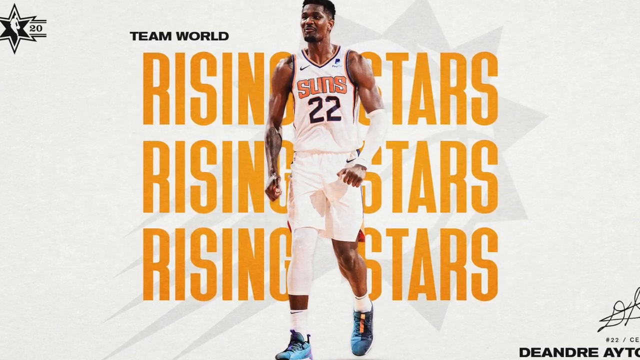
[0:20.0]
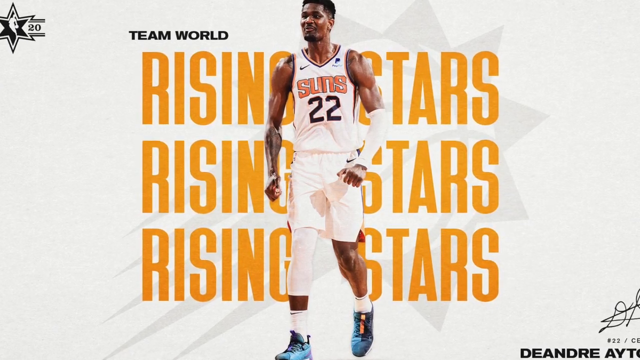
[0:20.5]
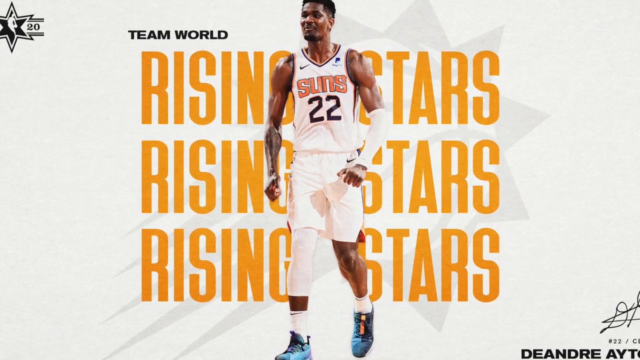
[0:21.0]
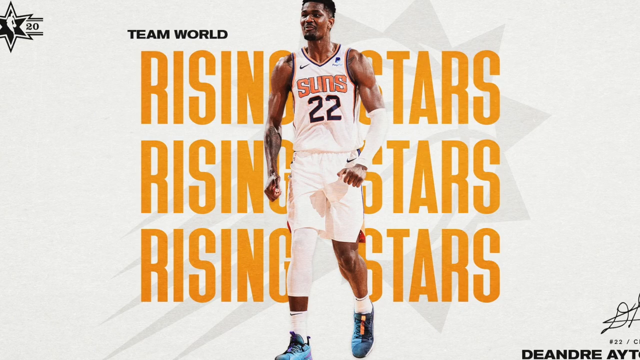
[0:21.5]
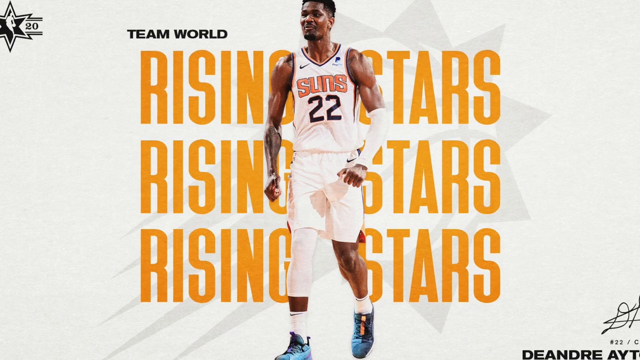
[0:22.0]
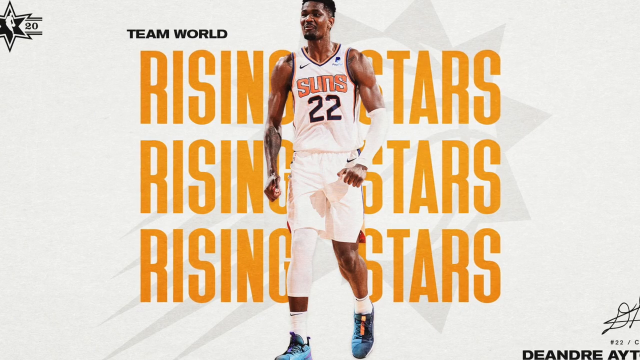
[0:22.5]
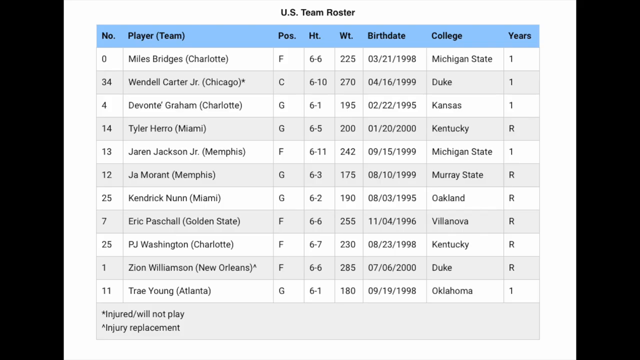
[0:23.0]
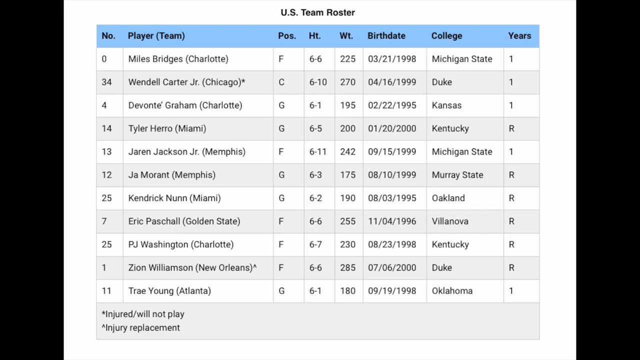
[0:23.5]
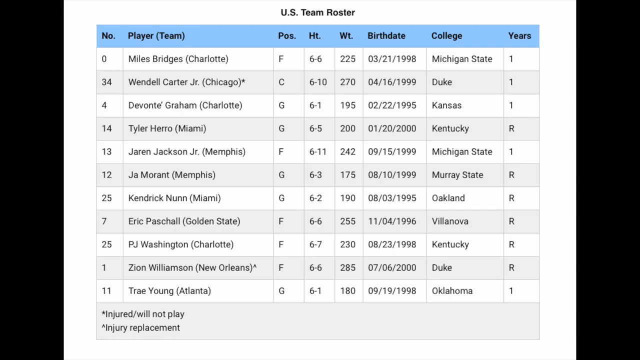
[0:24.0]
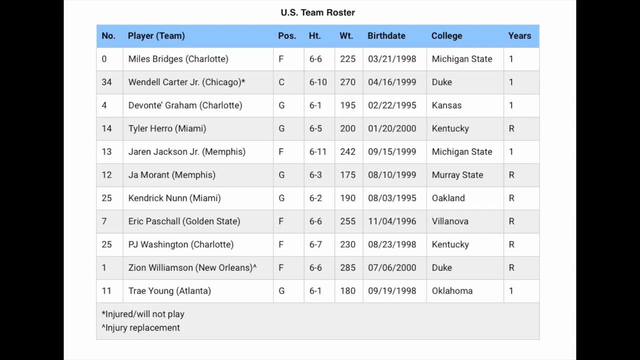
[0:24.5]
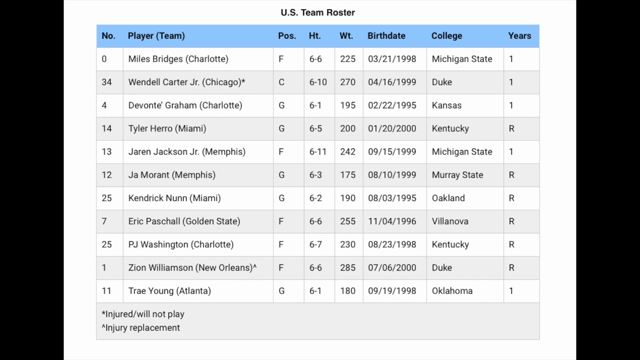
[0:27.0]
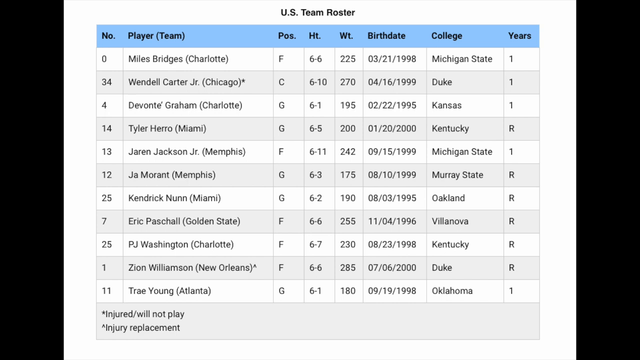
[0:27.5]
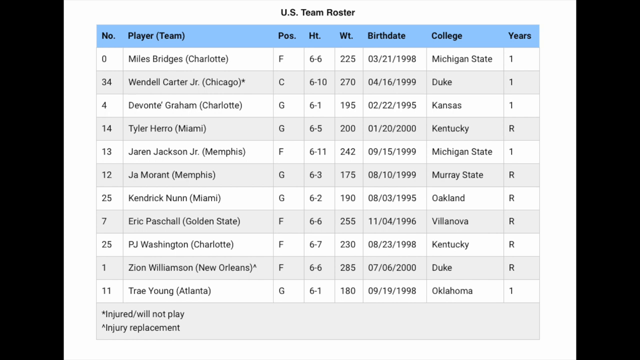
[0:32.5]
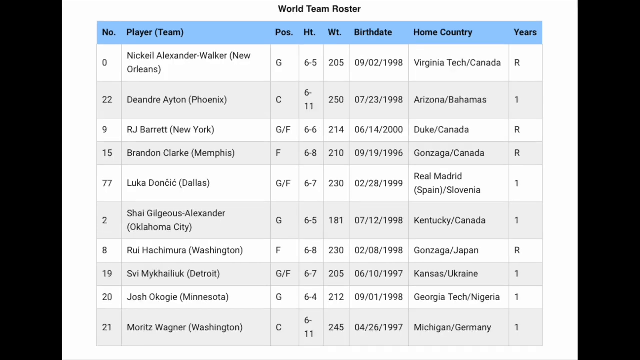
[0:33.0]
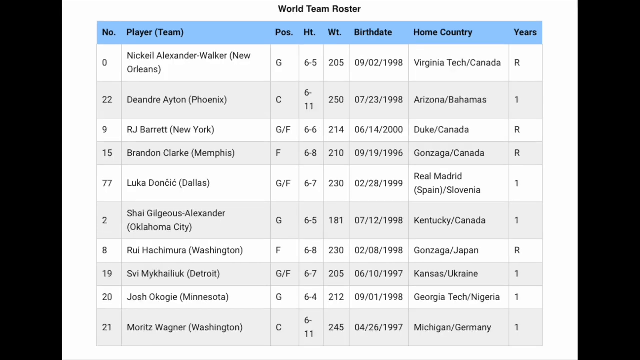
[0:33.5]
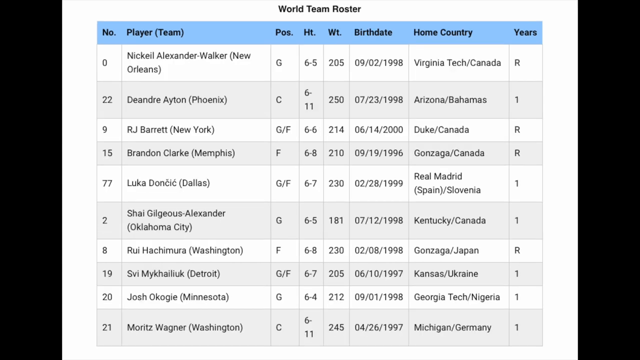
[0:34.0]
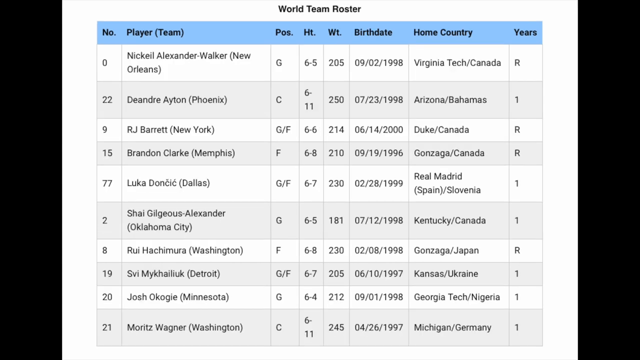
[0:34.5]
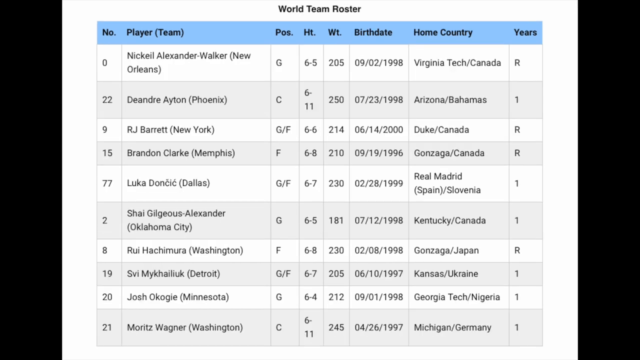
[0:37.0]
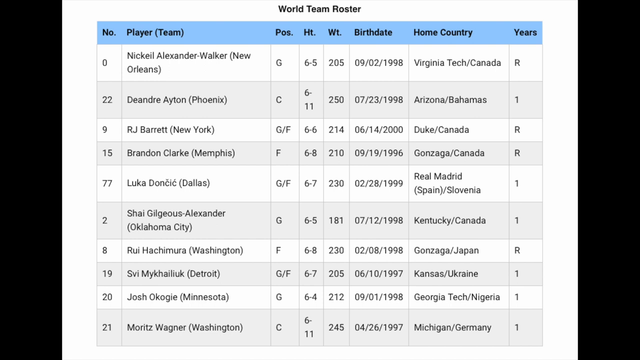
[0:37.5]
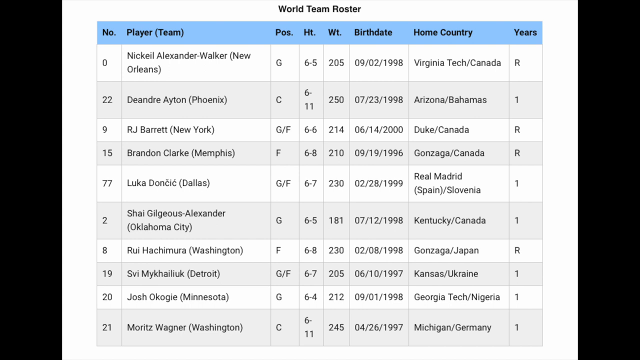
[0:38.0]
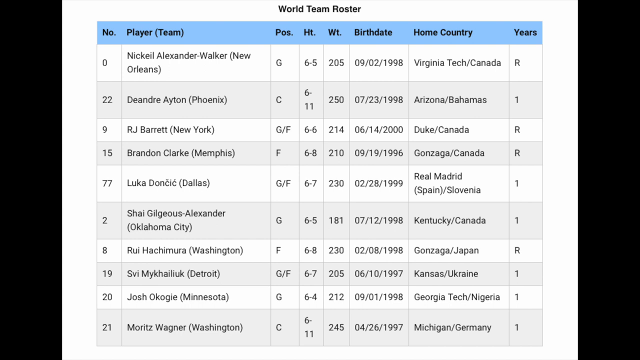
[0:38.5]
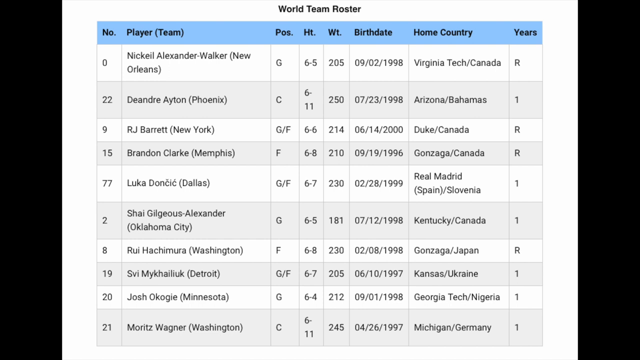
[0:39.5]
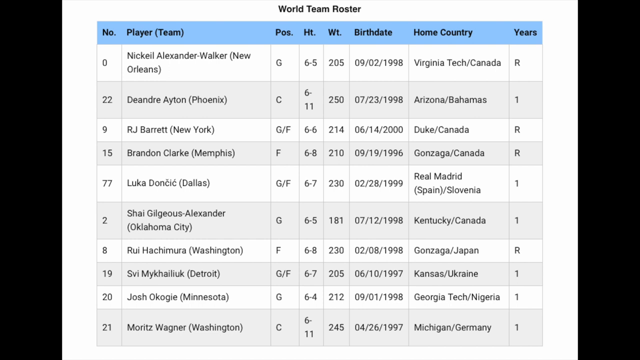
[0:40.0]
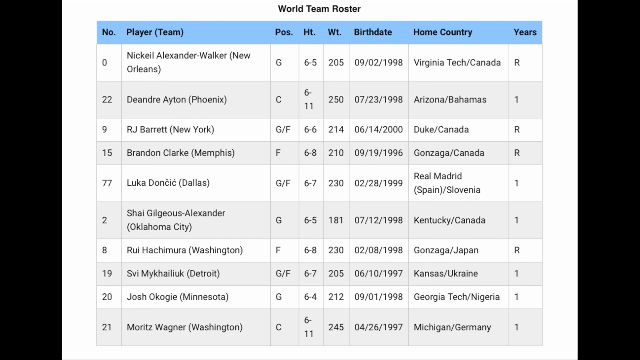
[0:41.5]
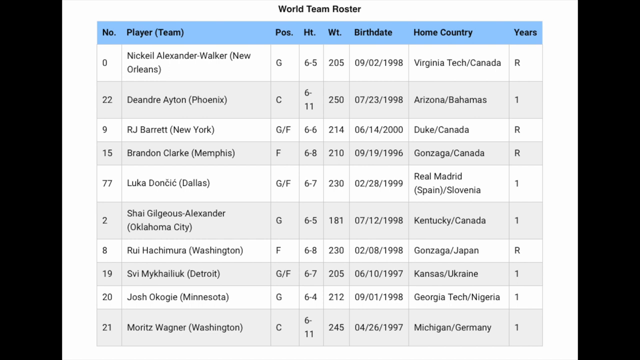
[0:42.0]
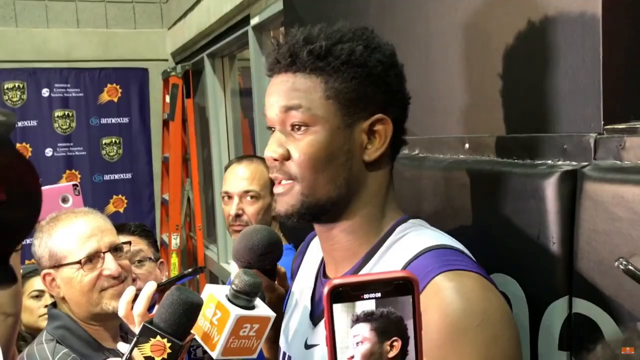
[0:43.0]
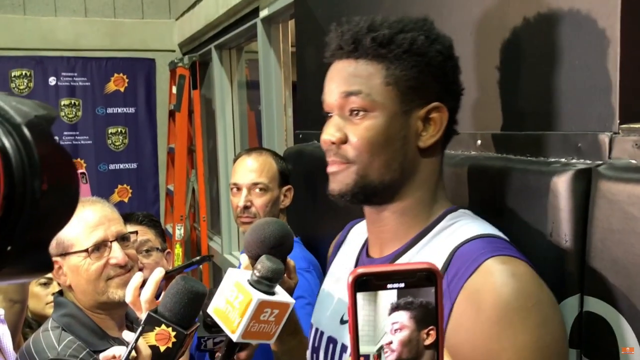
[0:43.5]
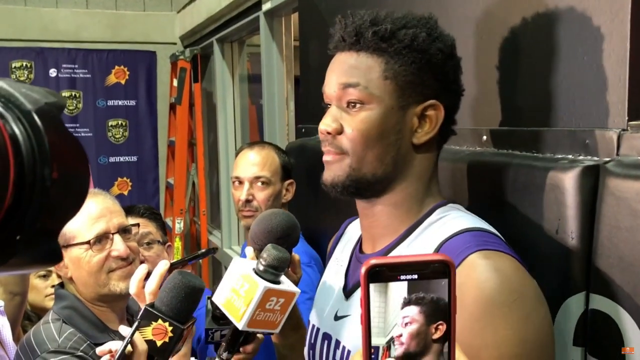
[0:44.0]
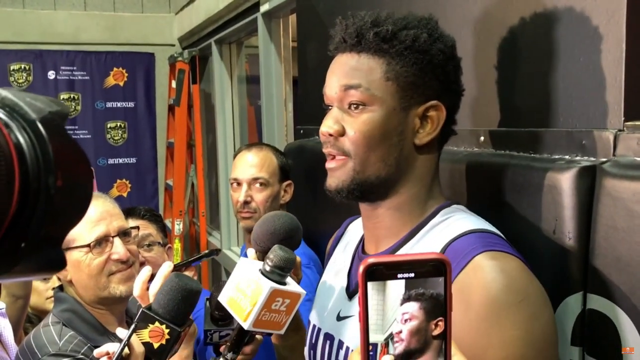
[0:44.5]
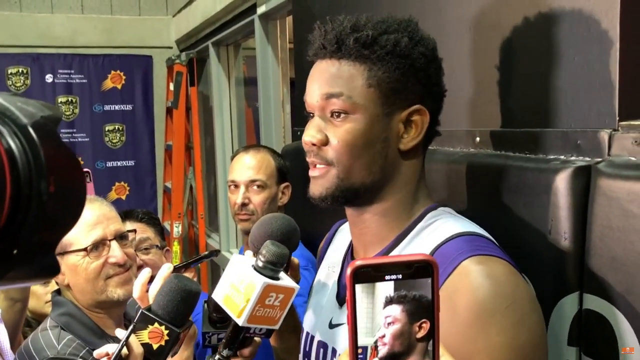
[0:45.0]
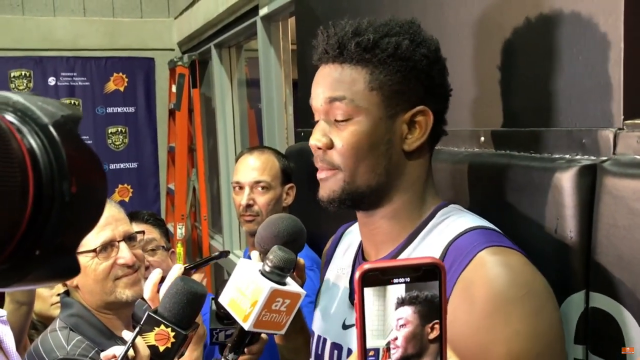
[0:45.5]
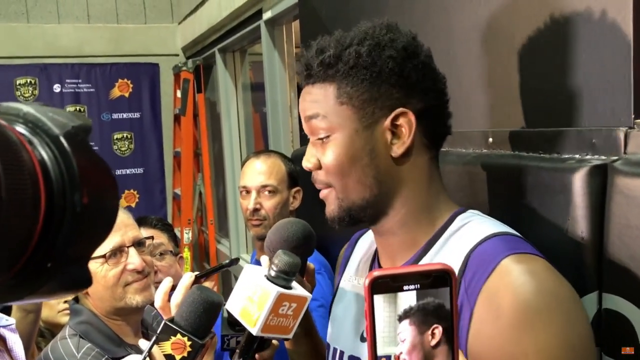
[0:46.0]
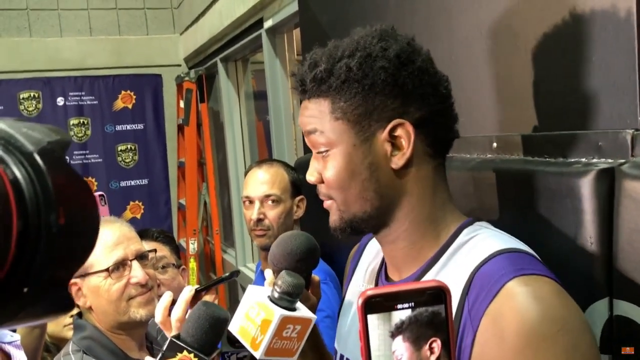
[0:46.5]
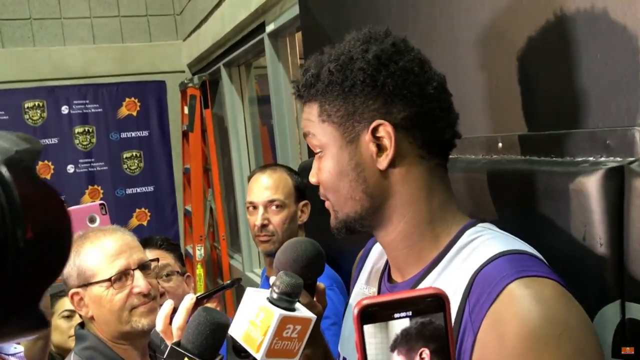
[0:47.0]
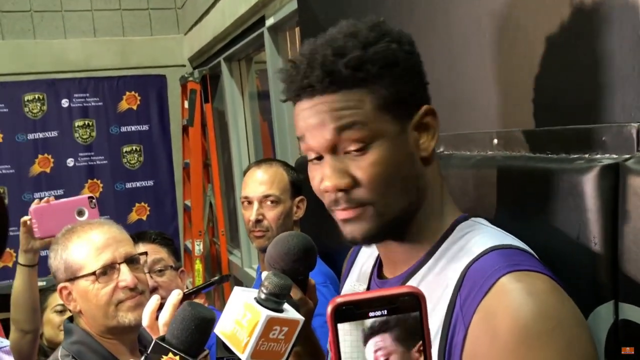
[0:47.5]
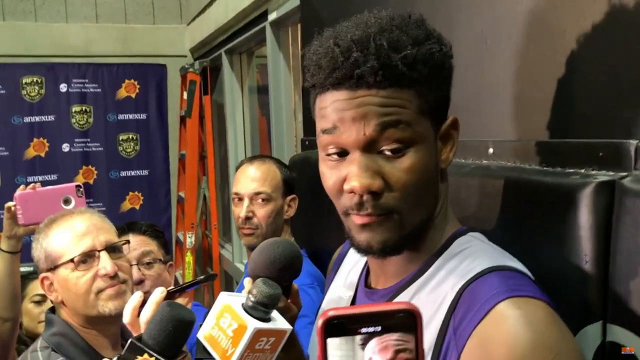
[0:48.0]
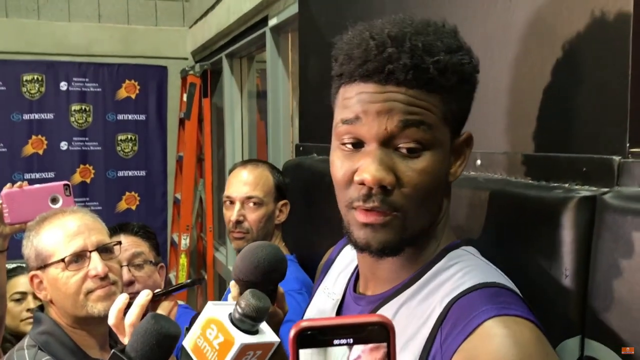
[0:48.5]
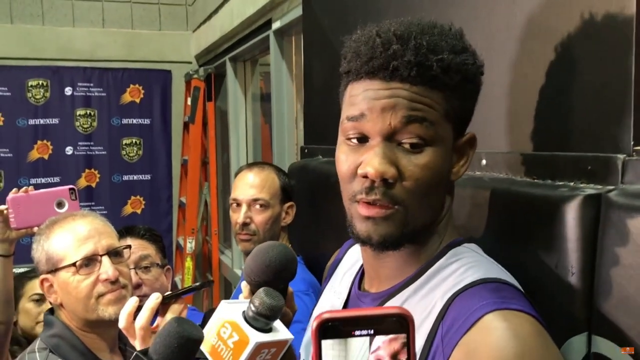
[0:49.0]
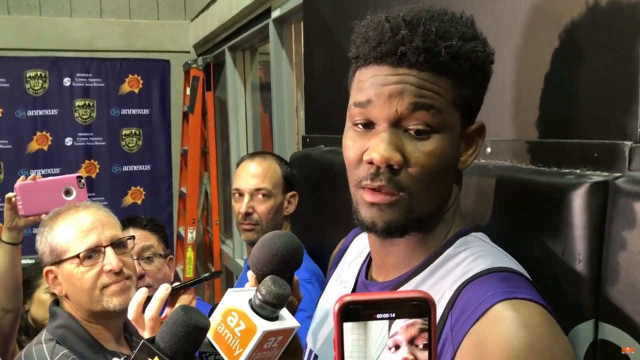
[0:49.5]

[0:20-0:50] The basketball player, number 22 for the Phoenix Suns, remains in the middle, looking to the left. Next comes a table listing 11 players, with "US team roster" at the top, so it appears to be a list of basketball players for Team USA. The table gives each player's height, weight, birth date, college, number of years played in the league, position, number and age. The scene changes to an NBA player talking in what looks like a press conference. Many people surround him, and there are microphones in front of his face. On the bottom right, someone is recording him on a cell phone, and in the bottom left area is a group of people, reporters. The player, on the right side, looks over to the right and then ahead to the left.